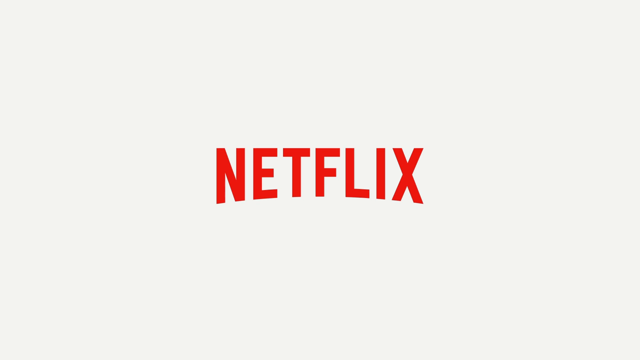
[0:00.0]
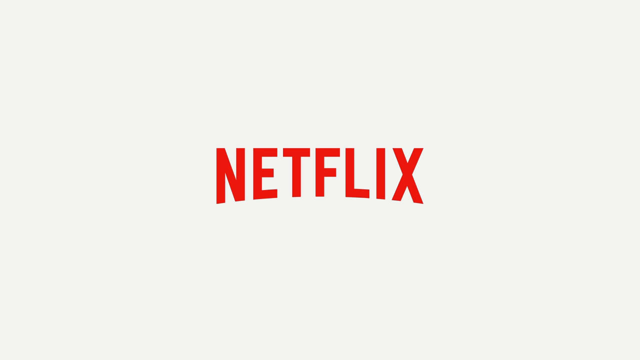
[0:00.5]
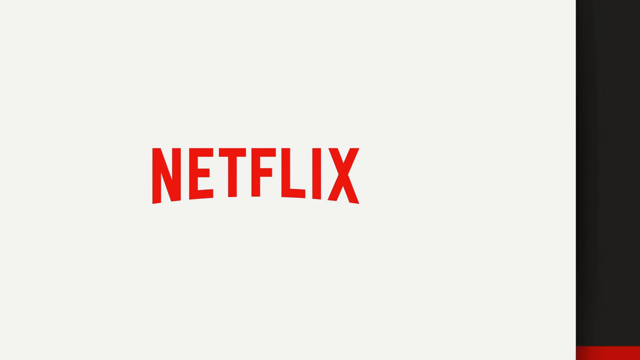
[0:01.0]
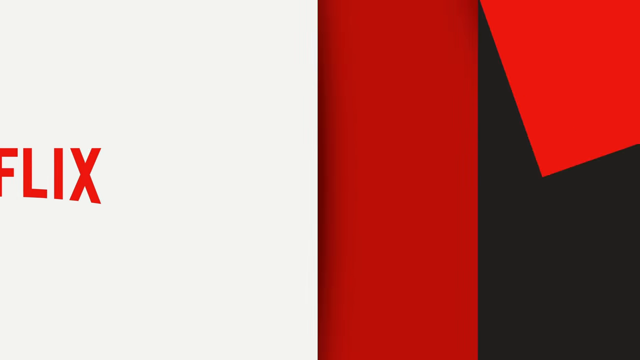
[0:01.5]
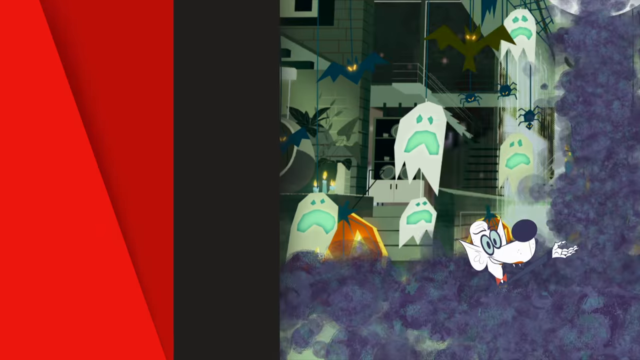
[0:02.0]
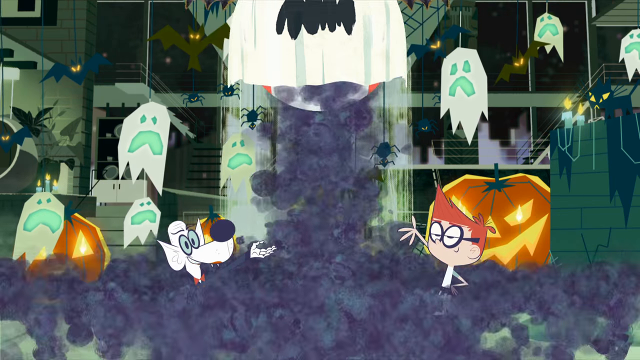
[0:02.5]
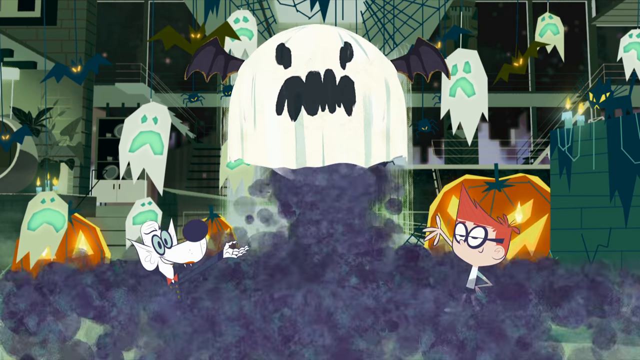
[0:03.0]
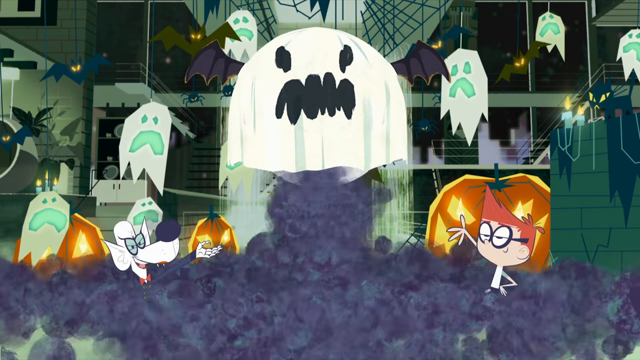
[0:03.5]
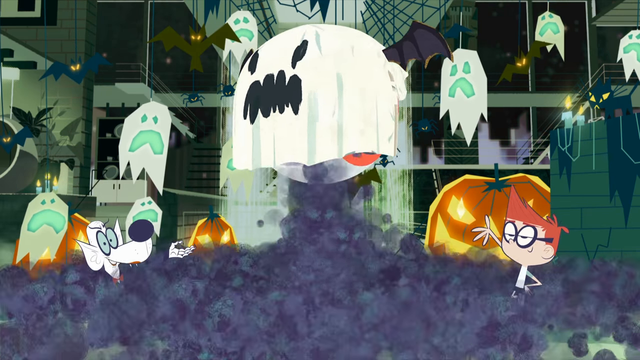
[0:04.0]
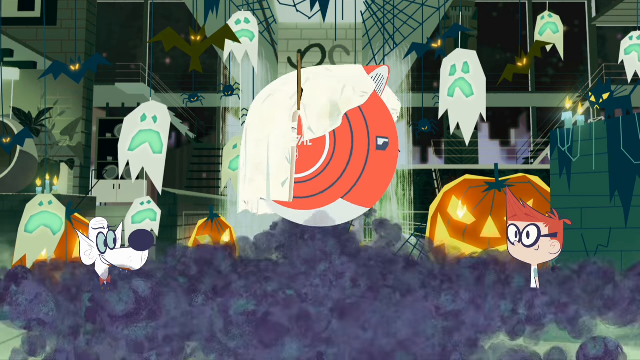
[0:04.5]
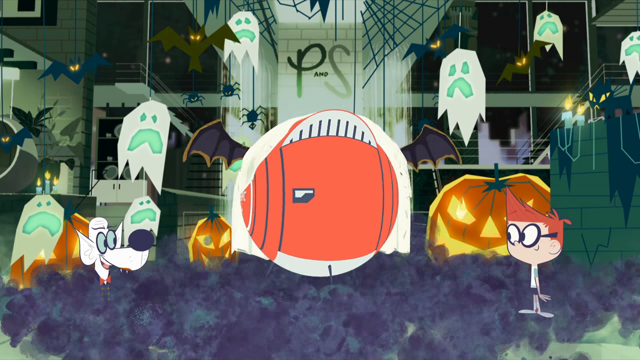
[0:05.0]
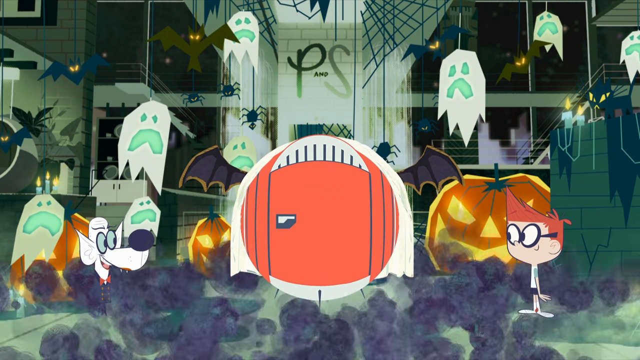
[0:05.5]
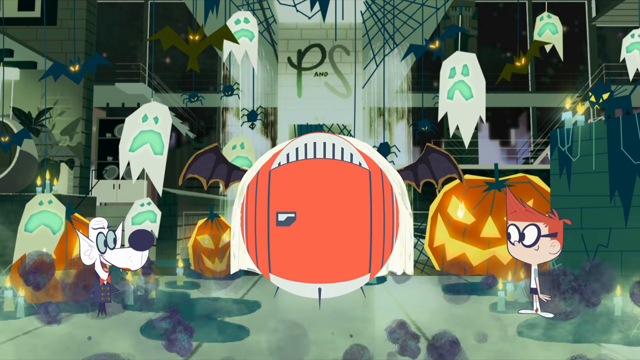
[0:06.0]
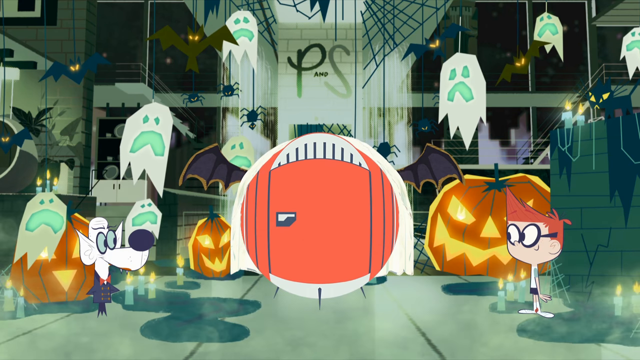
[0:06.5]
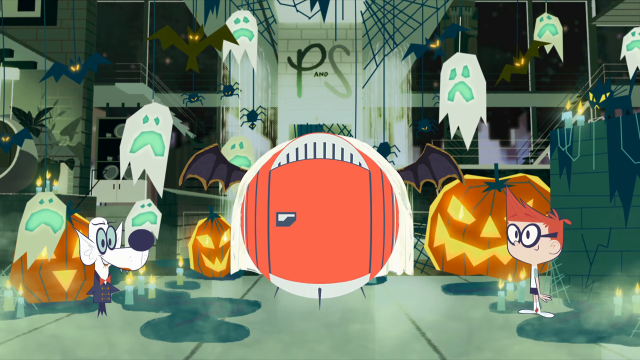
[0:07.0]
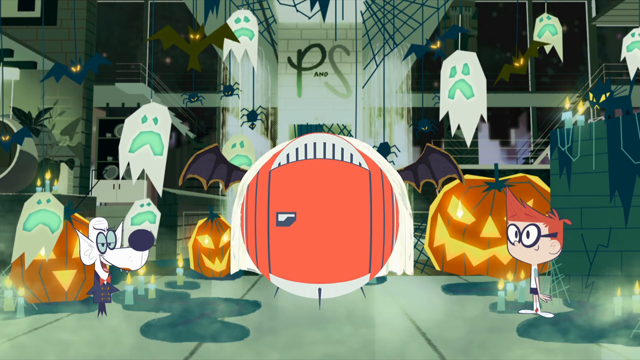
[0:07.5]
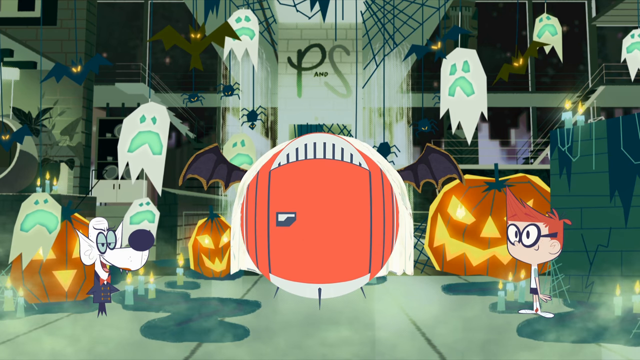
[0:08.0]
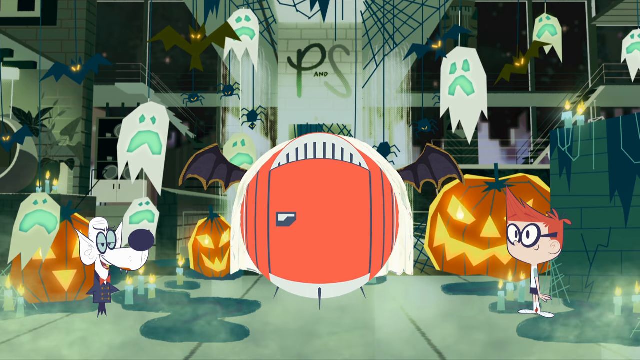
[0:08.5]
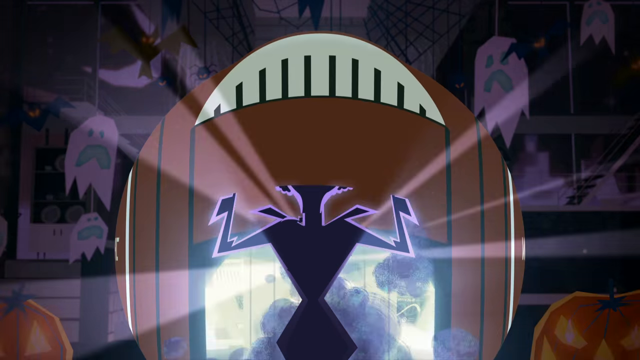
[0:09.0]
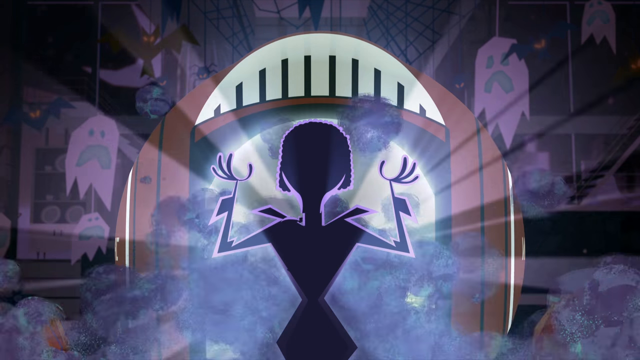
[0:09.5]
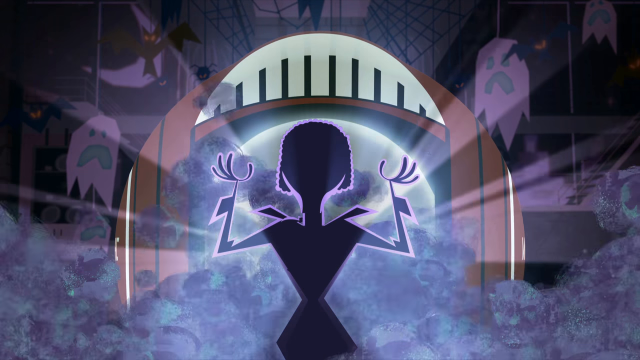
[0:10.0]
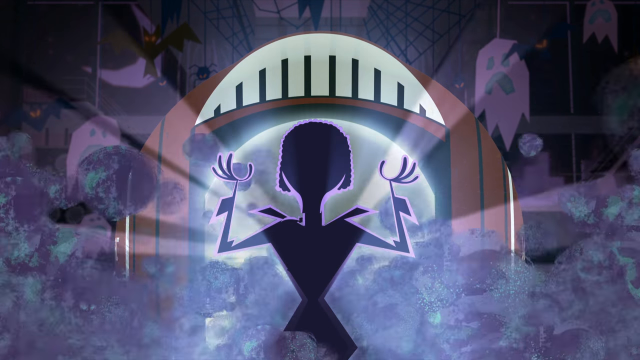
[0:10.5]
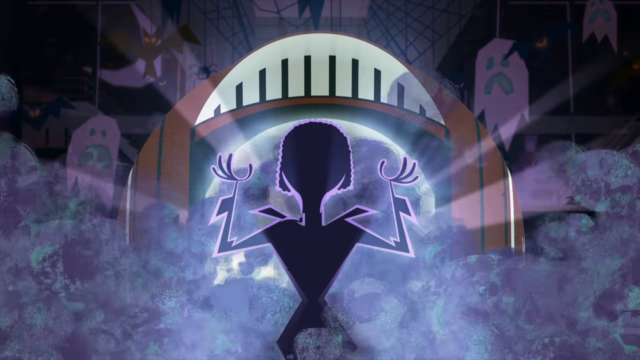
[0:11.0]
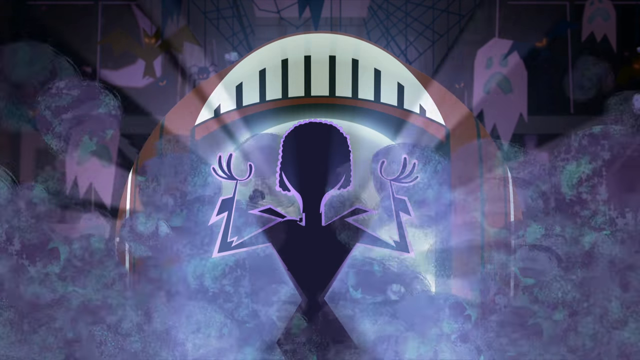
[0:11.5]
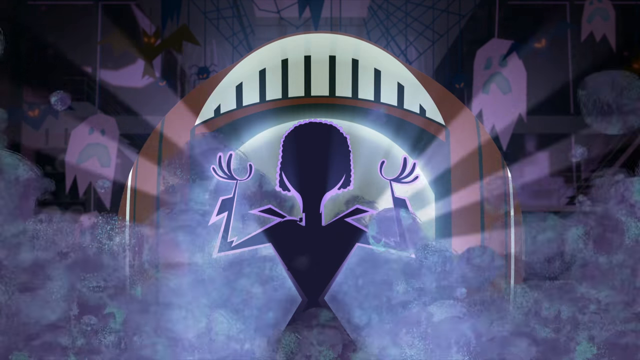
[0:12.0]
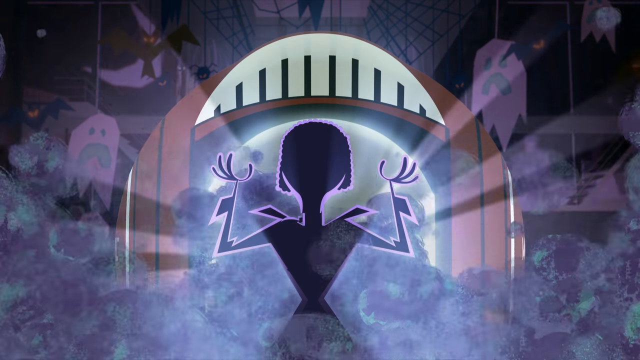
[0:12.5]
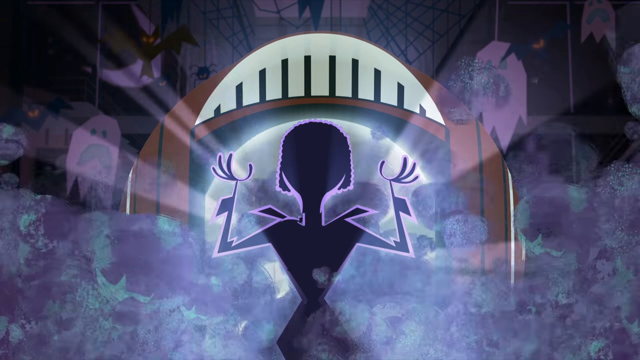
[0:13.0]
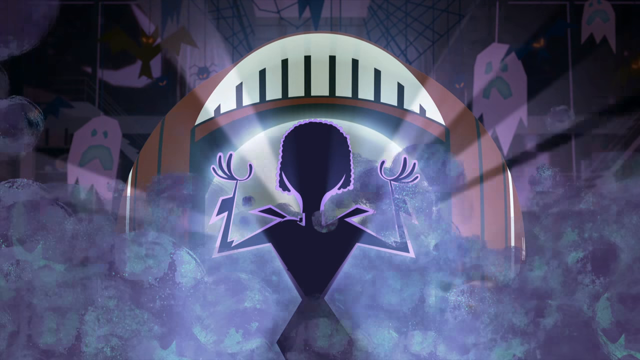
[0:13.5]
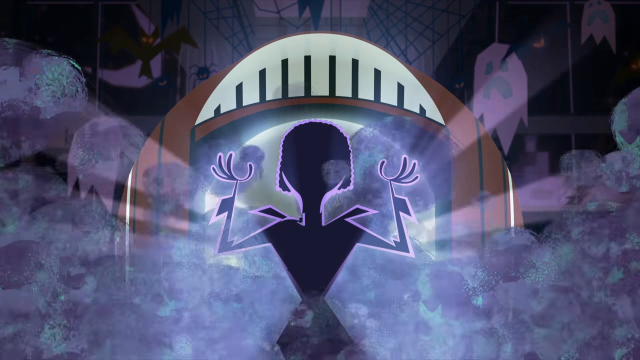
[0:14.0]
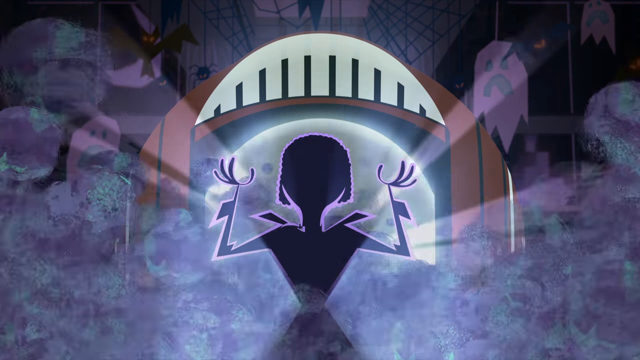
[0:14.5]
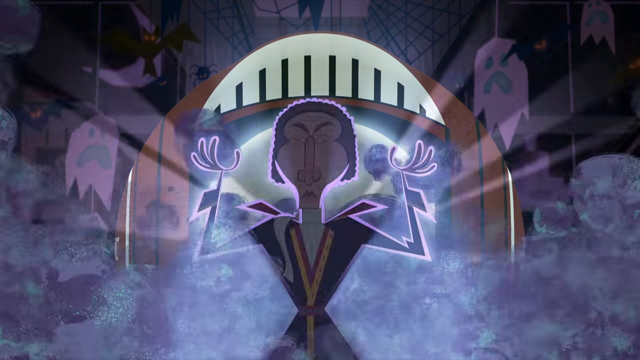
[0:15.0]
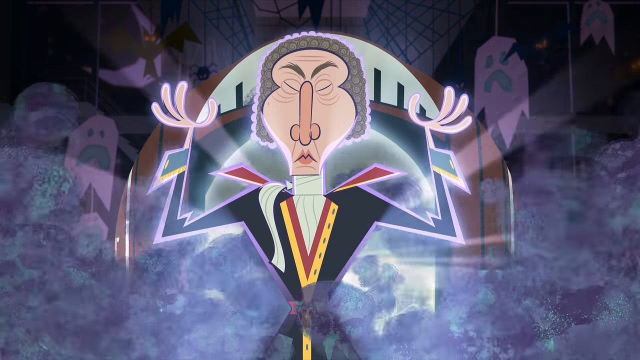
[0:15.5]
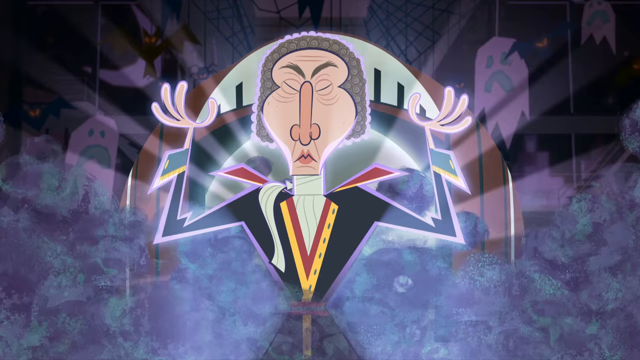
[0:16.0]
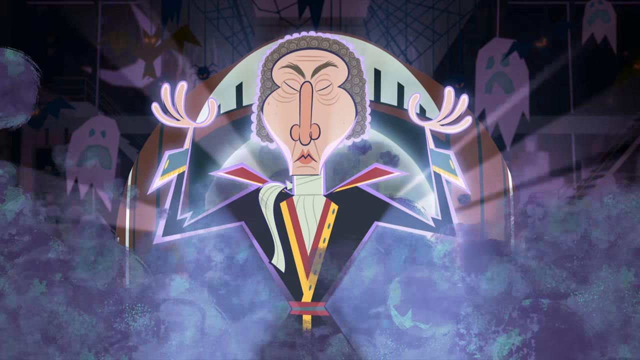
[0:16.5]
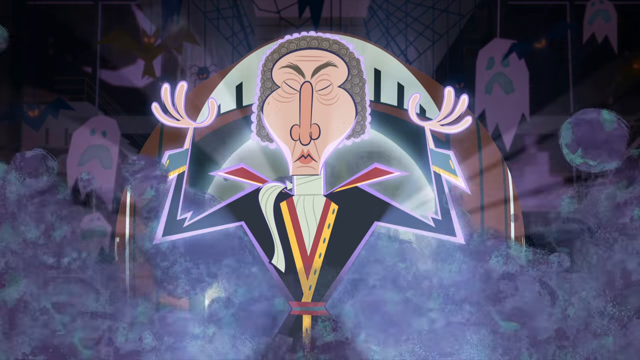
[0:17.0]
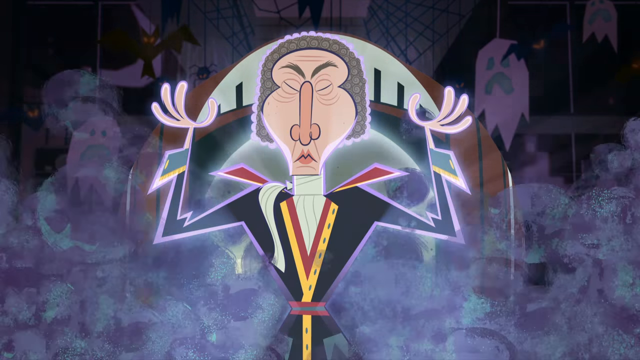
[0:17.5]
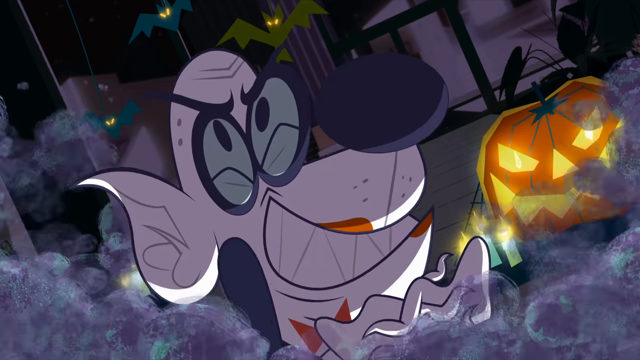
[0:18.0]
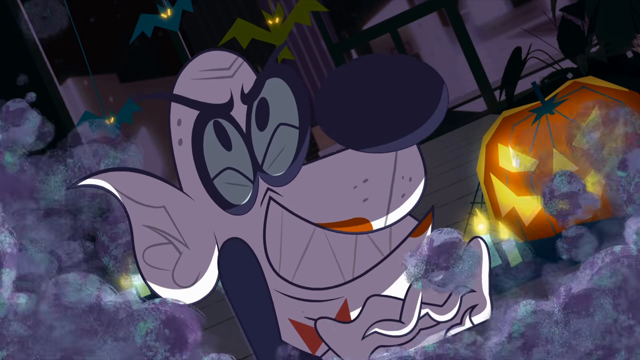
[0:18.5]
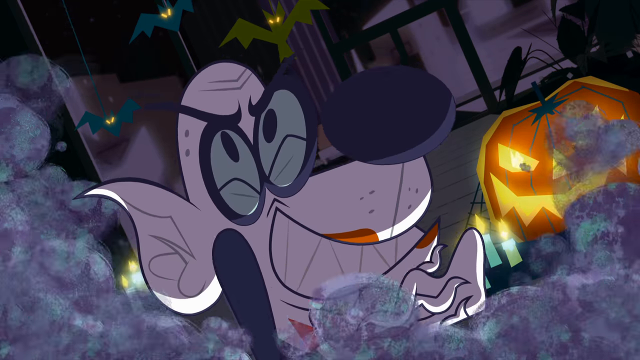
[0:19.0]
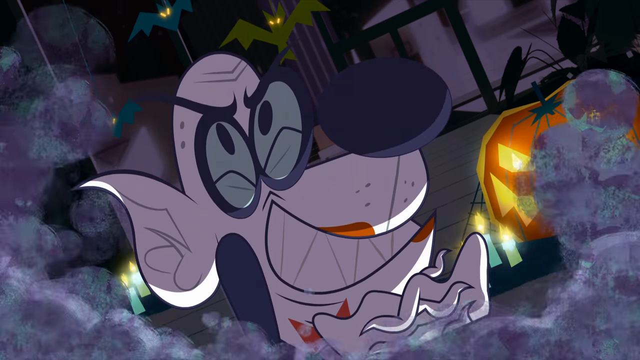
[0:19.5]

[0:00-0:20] A white Netflix logo appears and transforms into a cartoon of a dog and a human talking together, in what seems like a mad scientist or laboratory sort of setting. The dog has a black nose and looks almost smart, almost as if he has glasses, though he does not. To his right is a kid with orange hair who wears his own glasses; the dog and the kid look very similar. The scene is Halloween themed. What appears to be a vampire lands in a pumpkin spaceship; by his design he kind of looks like Mozart or some sort of historical figure. They exit the spaceship, and the dog and the boy kind of examine things and look at each other. The dog is excited in a maniacal way, sort of like an evil laugh.